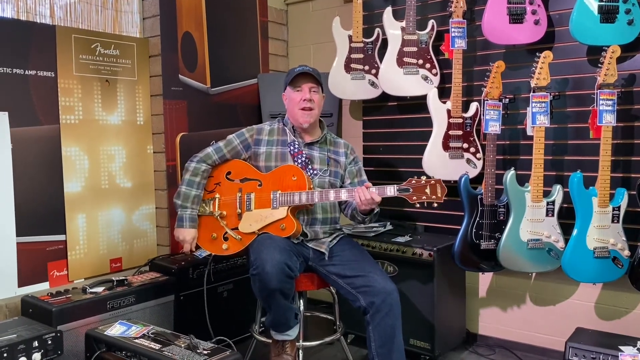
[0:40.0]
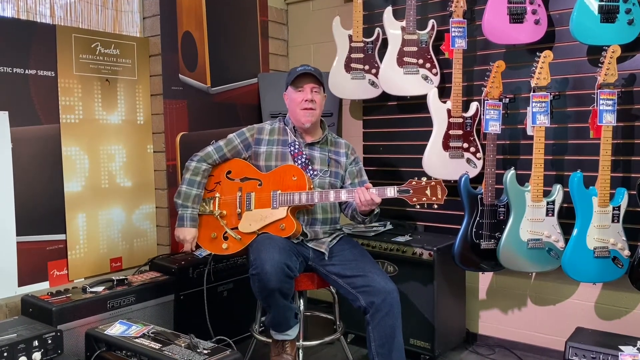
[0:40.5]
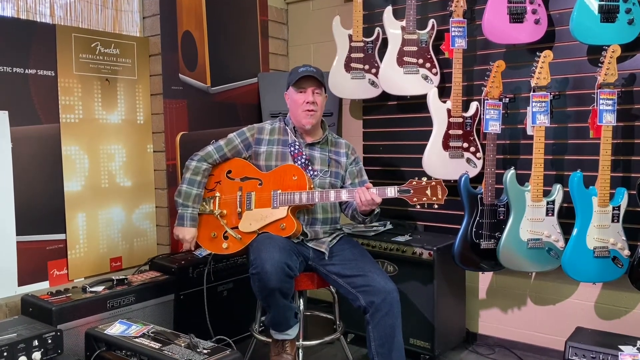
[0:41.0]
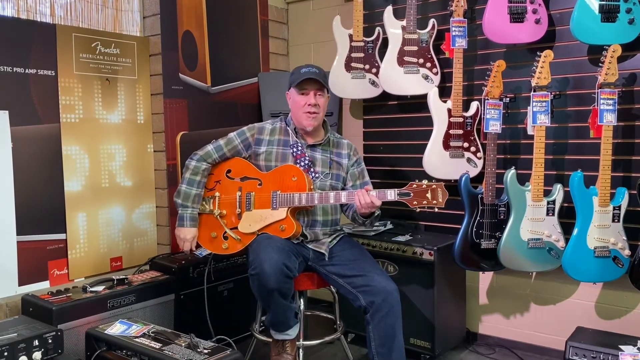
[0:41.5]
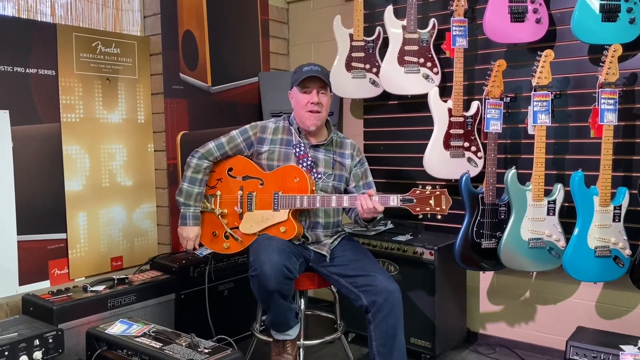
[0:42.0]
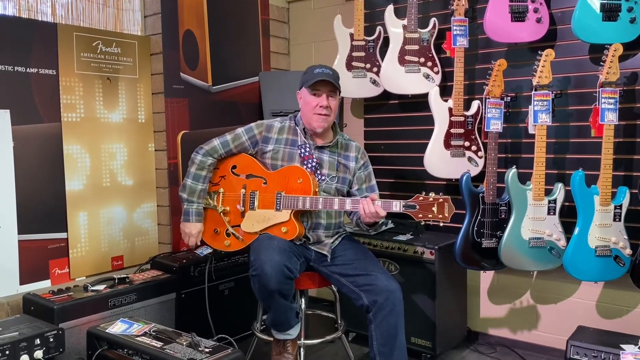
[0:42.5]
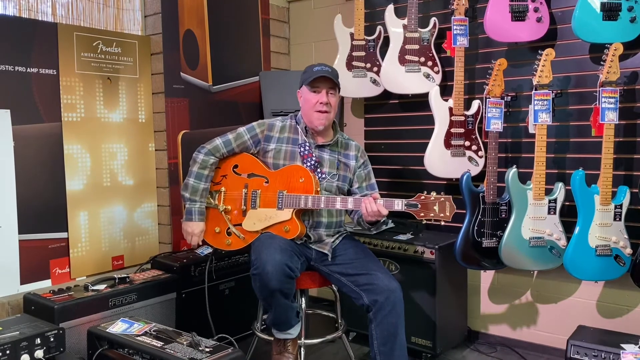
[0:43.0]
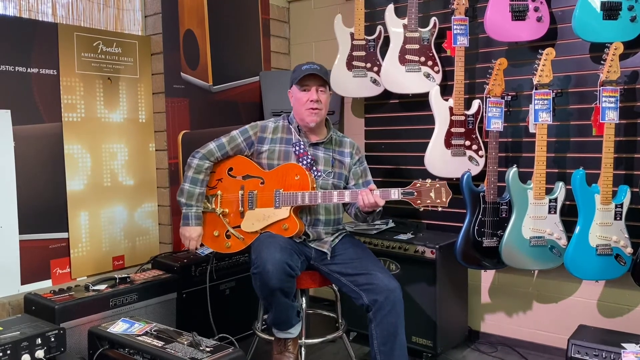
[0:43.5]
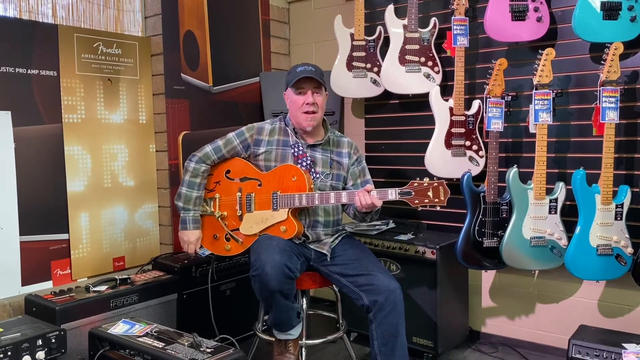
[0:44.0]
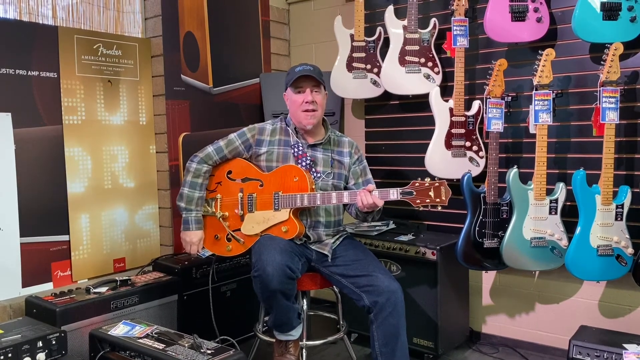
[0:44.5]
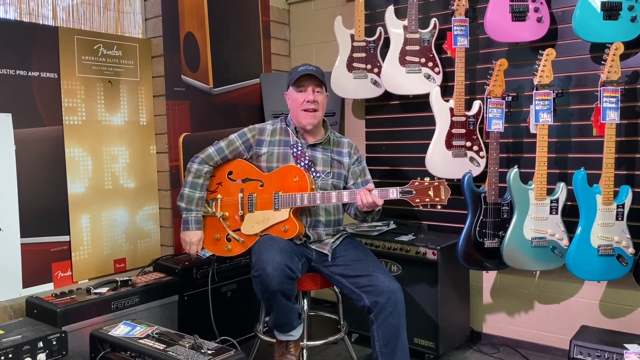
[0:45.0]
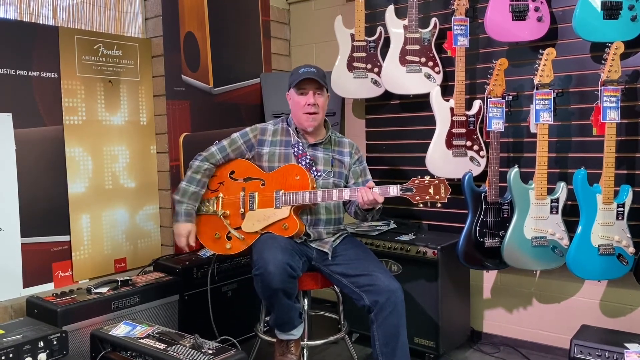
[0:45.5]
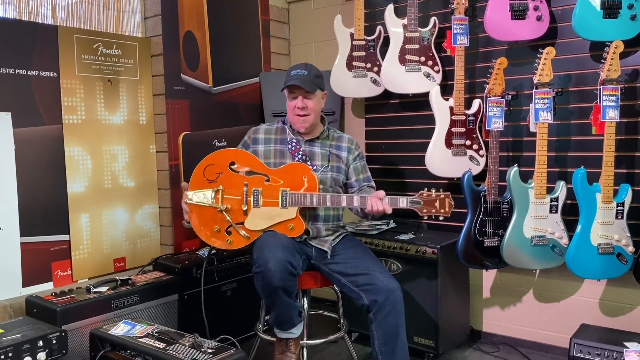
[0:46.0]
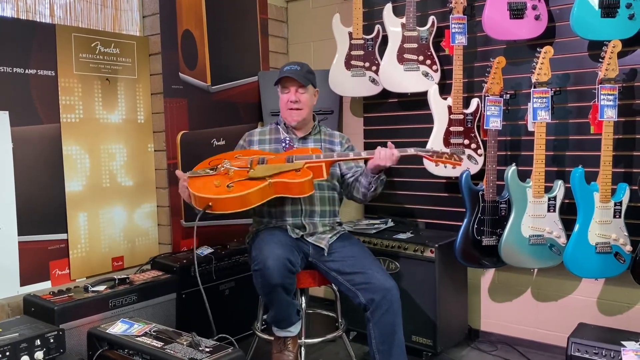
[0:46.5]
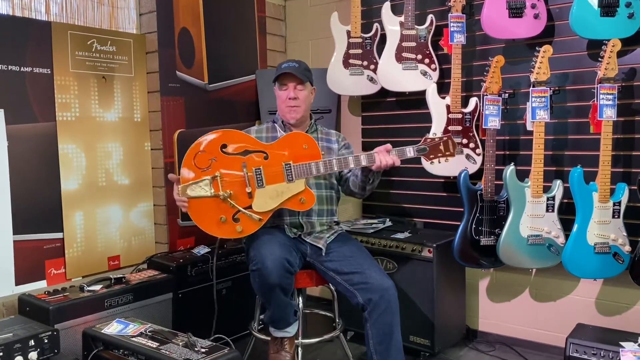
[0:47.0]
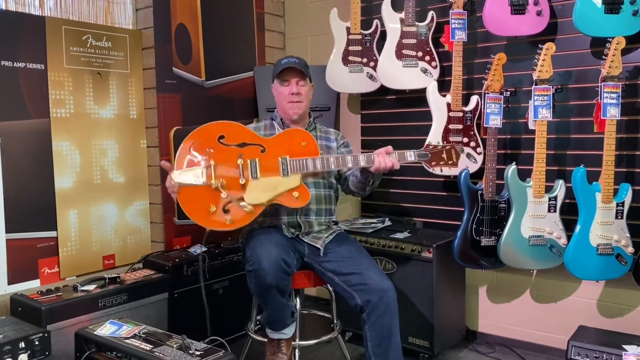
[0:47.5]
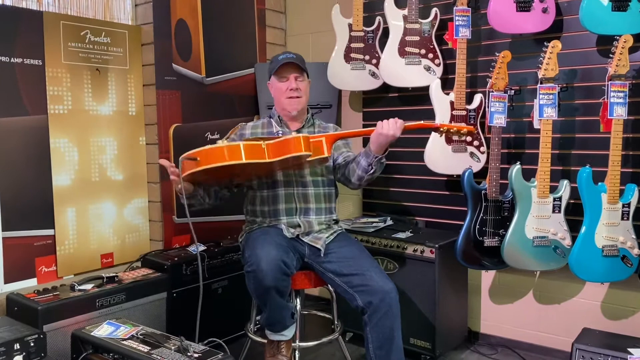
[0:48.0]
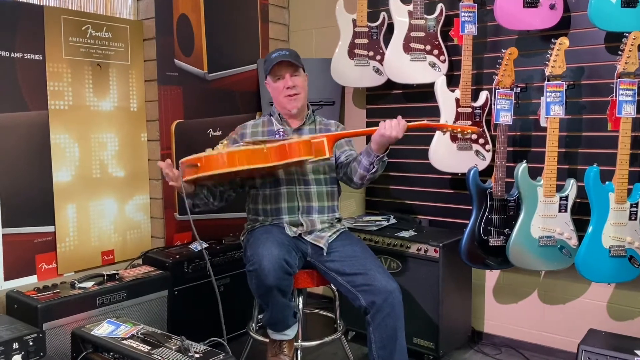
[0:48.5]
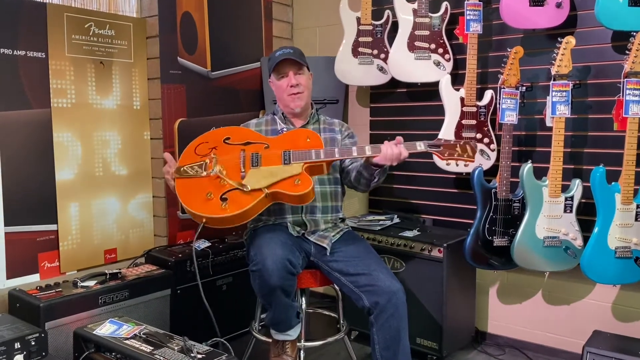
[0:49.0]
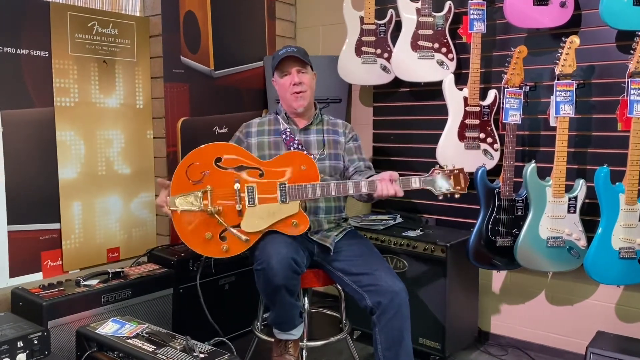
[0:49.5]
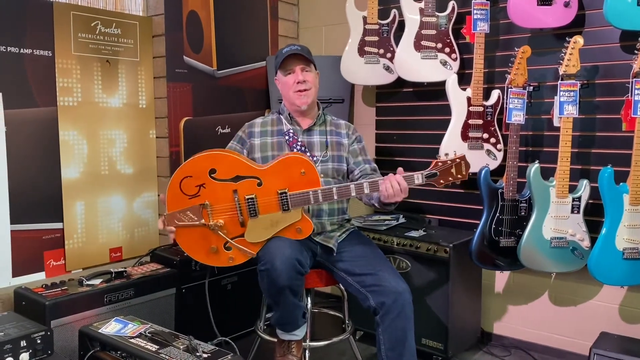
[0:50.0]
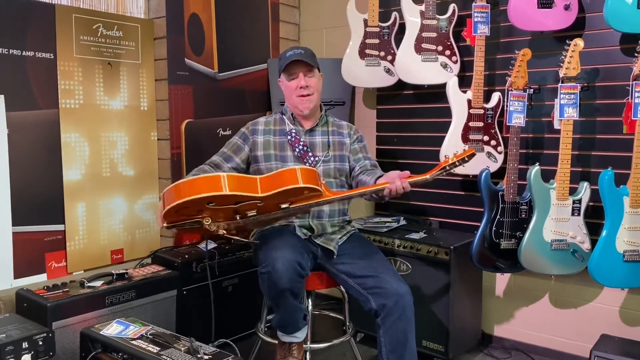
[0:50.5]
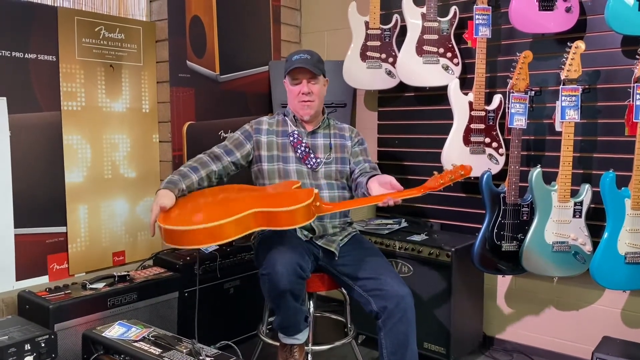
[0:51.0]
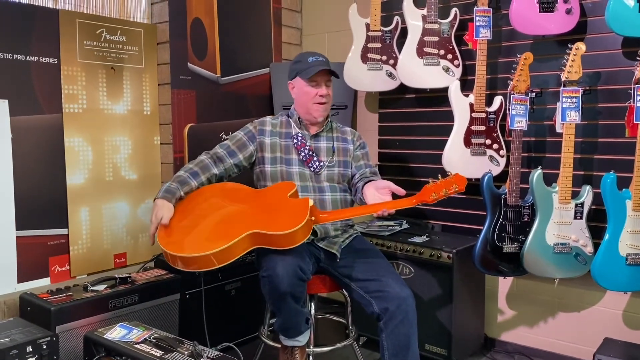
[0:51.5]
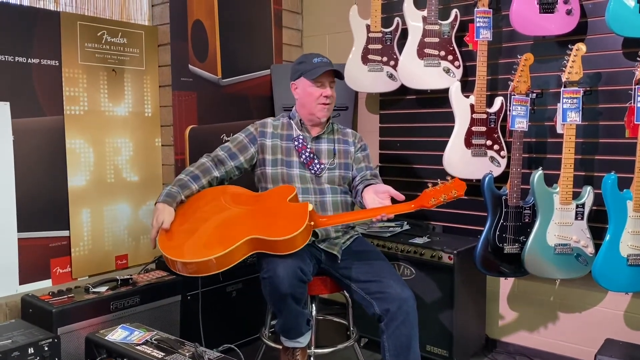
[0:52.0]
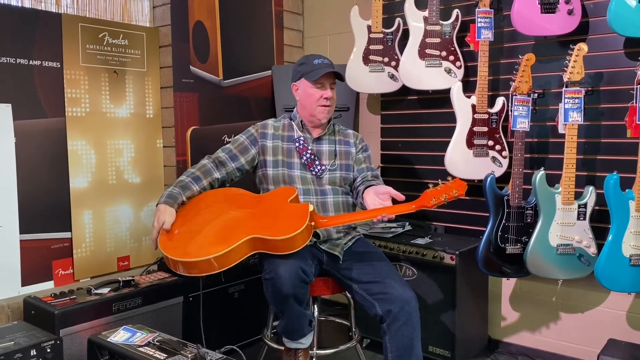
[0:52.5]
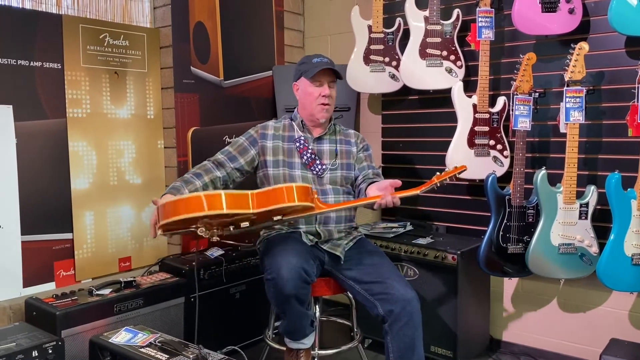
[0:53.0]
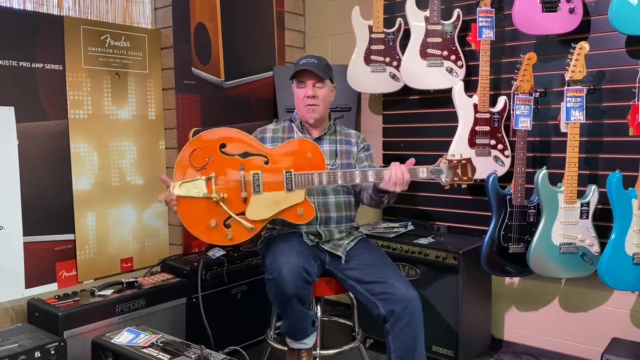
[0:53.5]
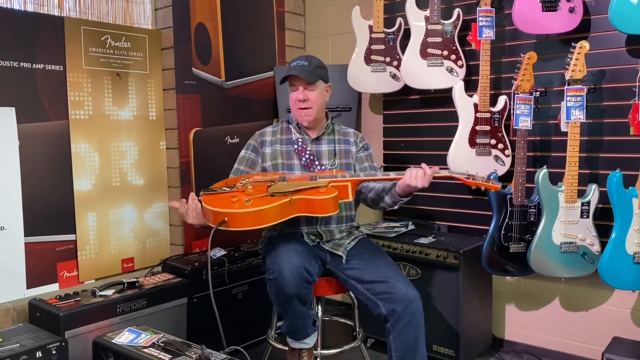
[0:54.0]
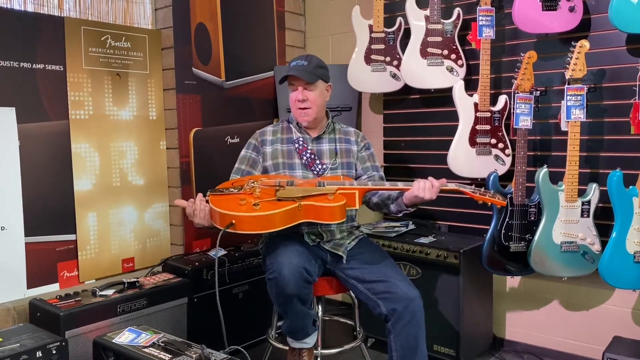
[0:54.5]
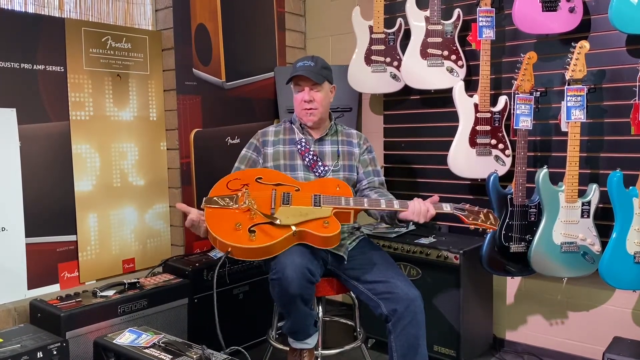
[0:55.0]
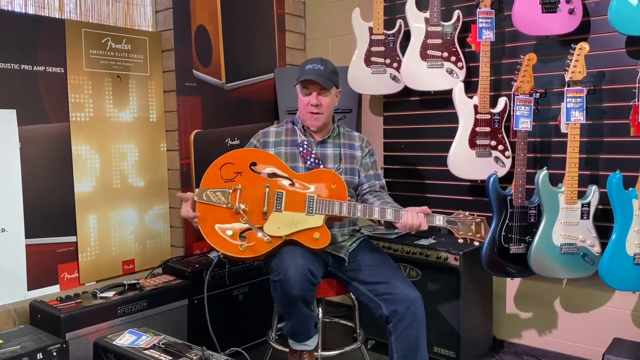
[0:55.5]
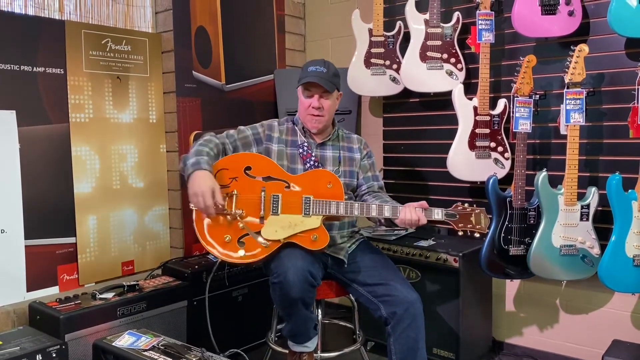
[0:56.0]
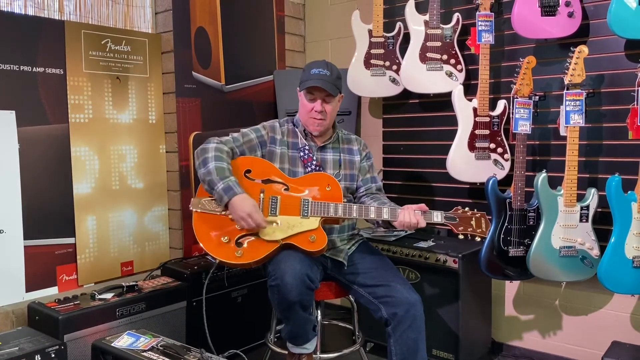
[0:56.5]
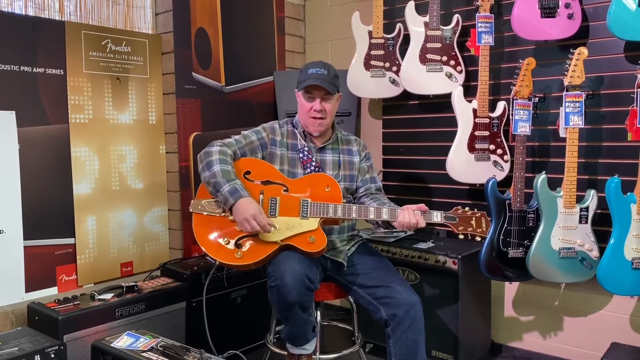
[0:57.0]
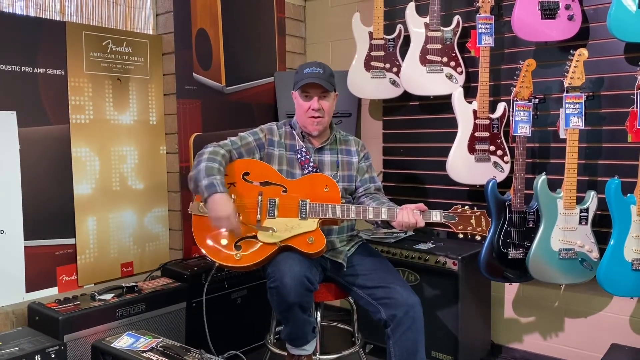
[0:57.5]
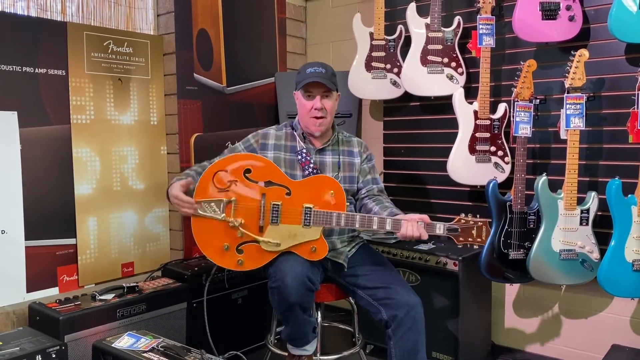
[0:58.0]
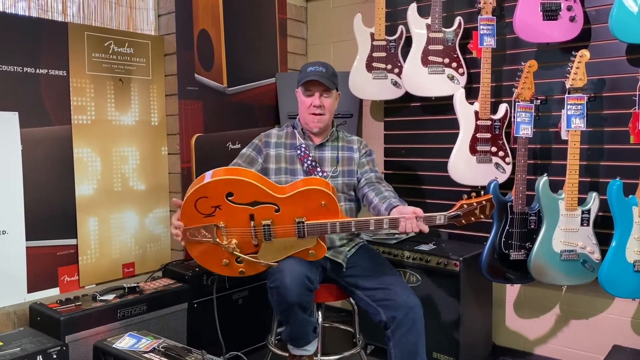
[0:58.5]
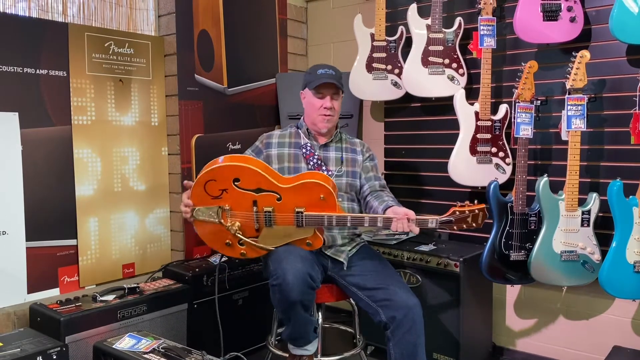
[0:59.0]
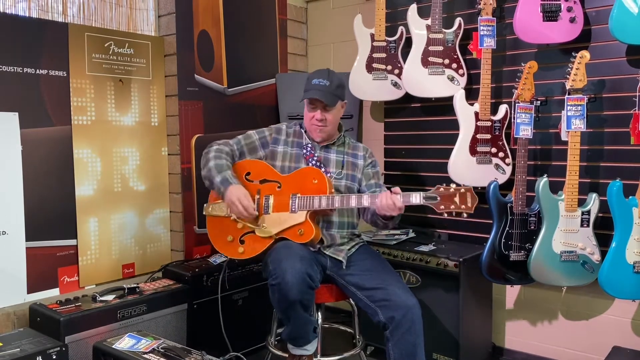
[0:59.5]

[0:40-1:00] The man continues talking to the viewer, in the same position as before. He then lifts the guitar with both hands and shows its different sides. First the right side is visible, with yellow outlines lining the middle of the sides of the guitar. He flips it over to the other side, which looks the same. The bottom side of the guitar is also visible: little golden knobs are at the top, and the bottom is all the same orange color. The guitar looks fairly new. On the right side is the spot where an aux cord would plug in to connect to surrounding equipment.